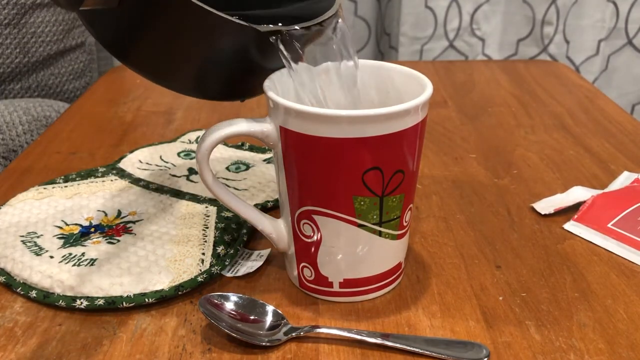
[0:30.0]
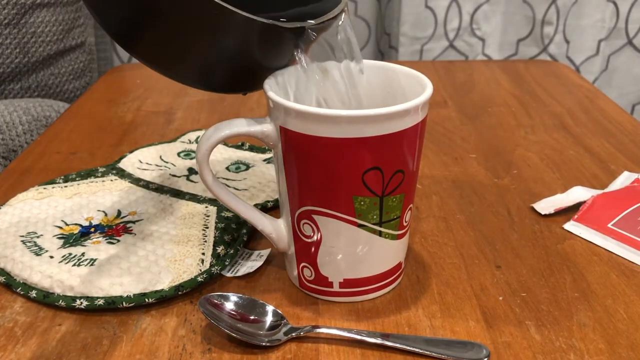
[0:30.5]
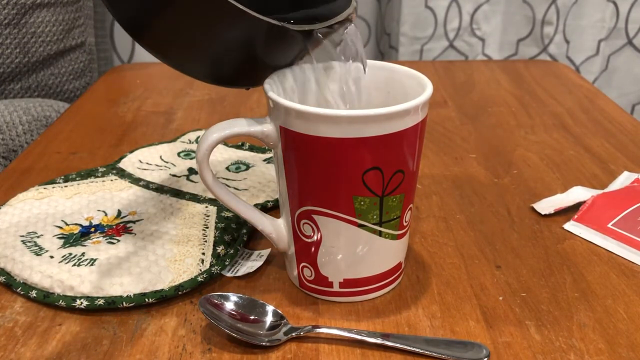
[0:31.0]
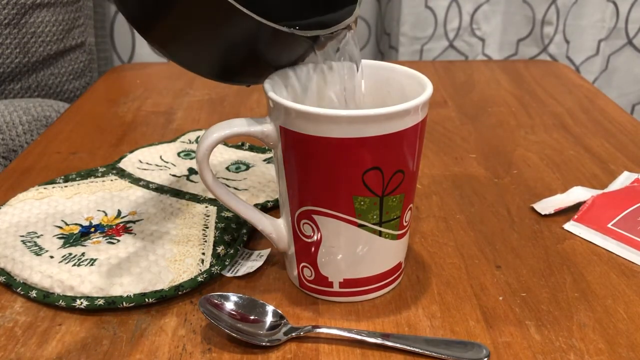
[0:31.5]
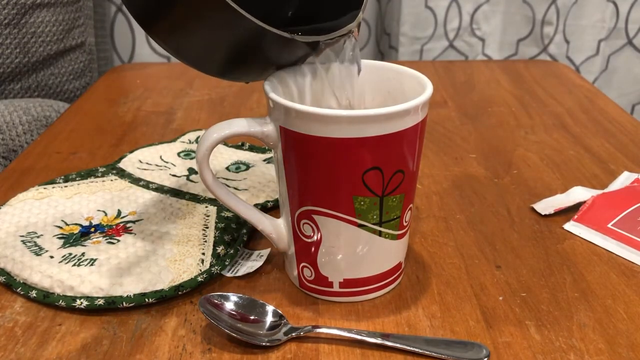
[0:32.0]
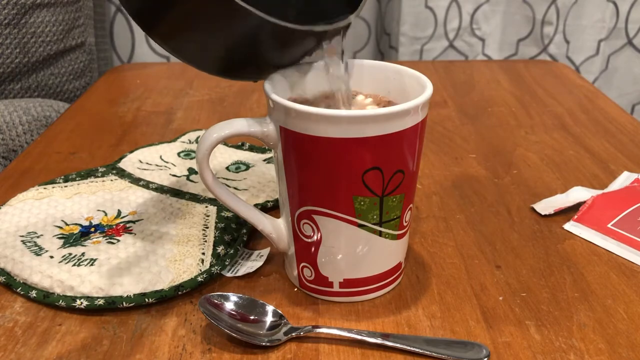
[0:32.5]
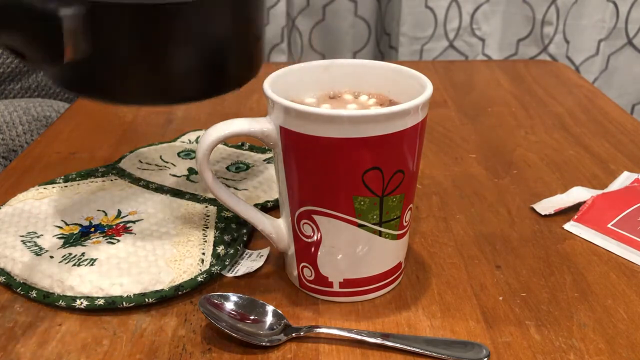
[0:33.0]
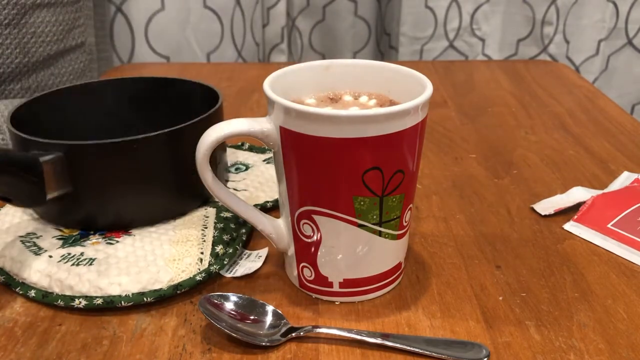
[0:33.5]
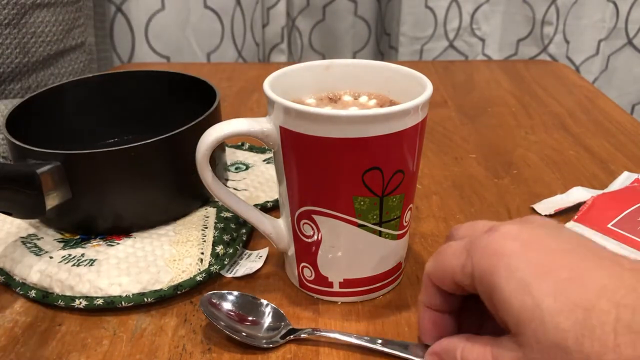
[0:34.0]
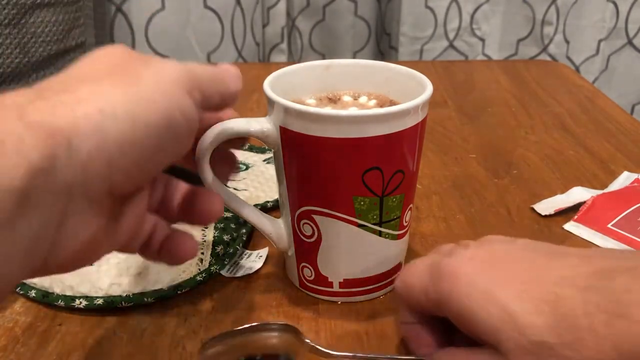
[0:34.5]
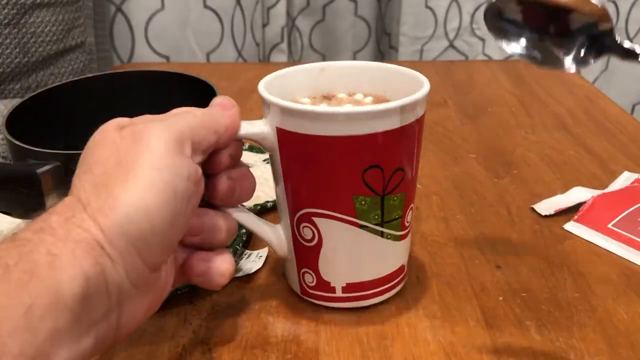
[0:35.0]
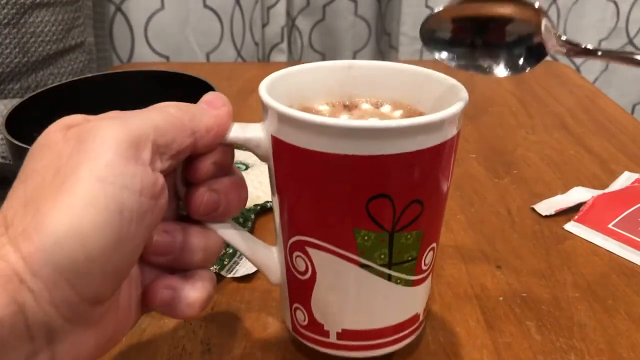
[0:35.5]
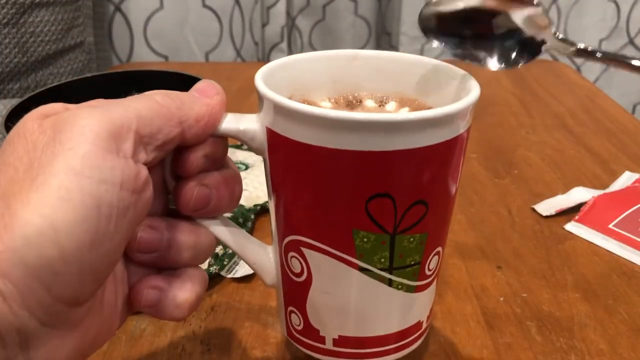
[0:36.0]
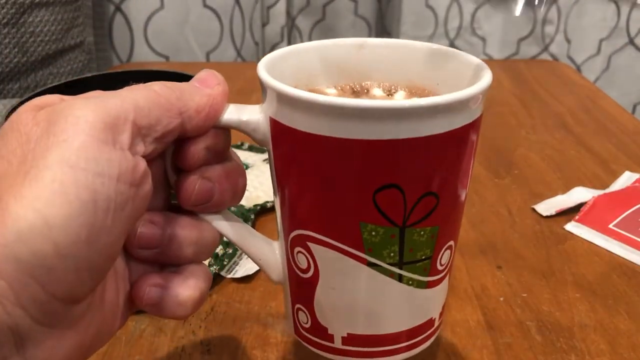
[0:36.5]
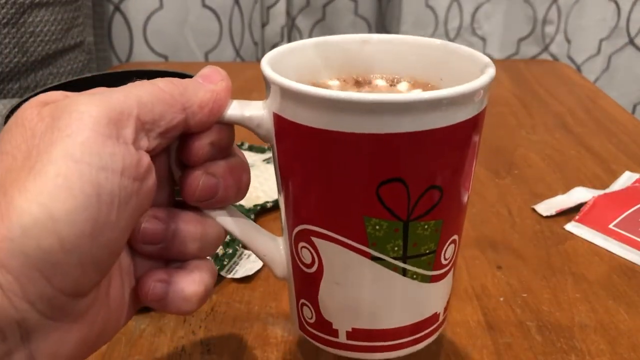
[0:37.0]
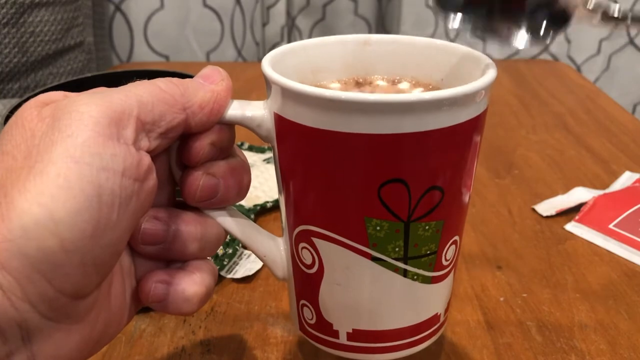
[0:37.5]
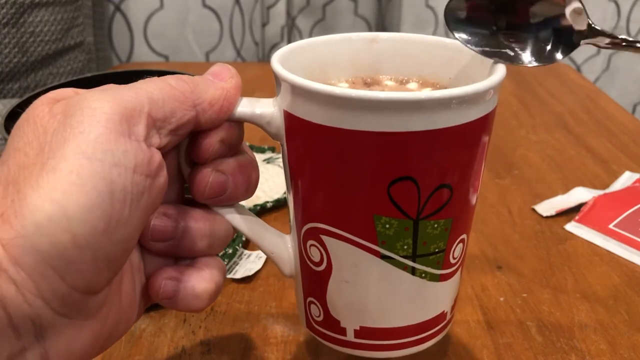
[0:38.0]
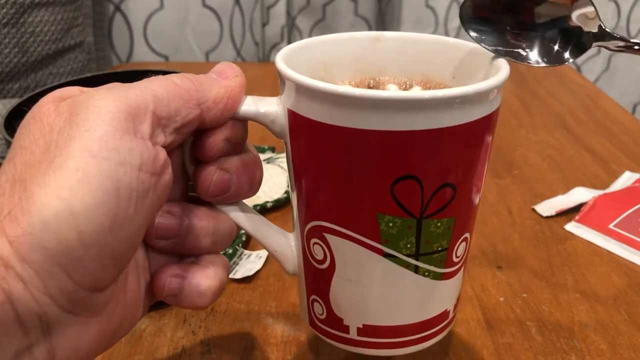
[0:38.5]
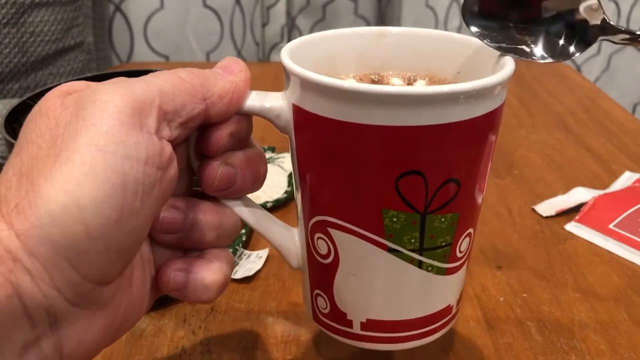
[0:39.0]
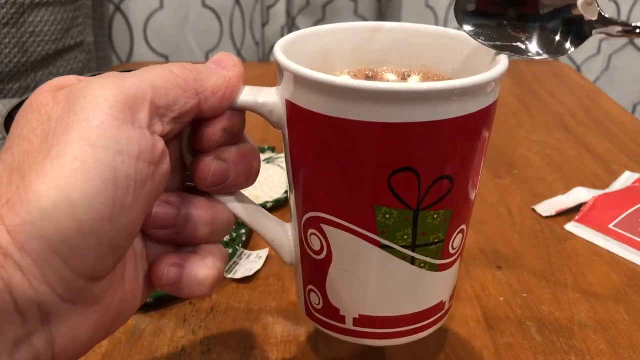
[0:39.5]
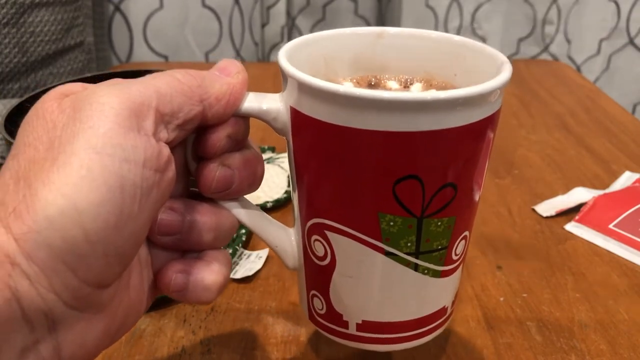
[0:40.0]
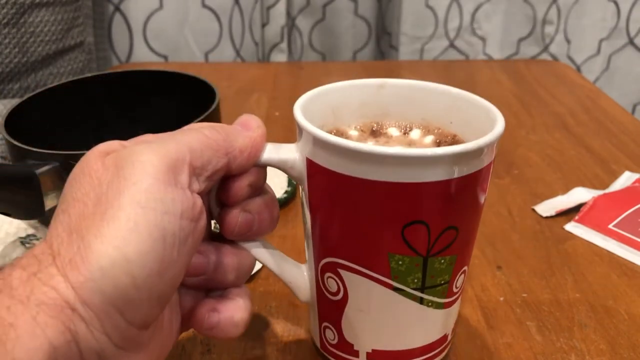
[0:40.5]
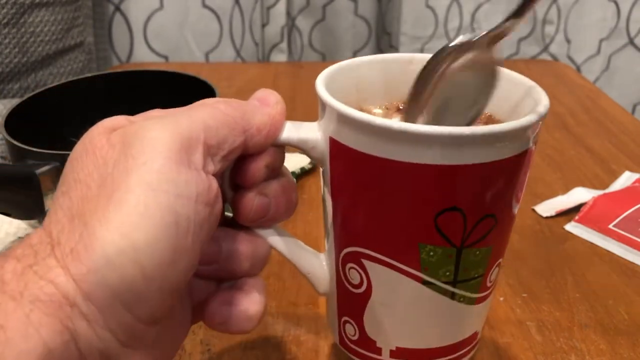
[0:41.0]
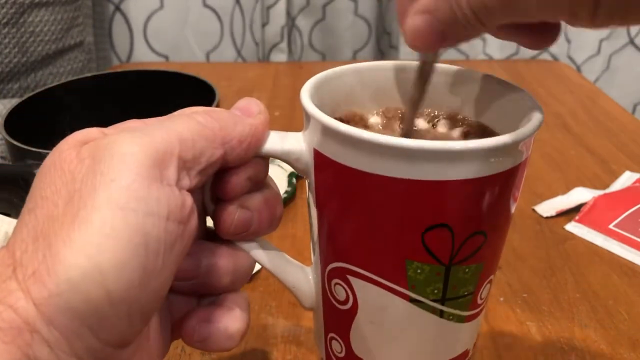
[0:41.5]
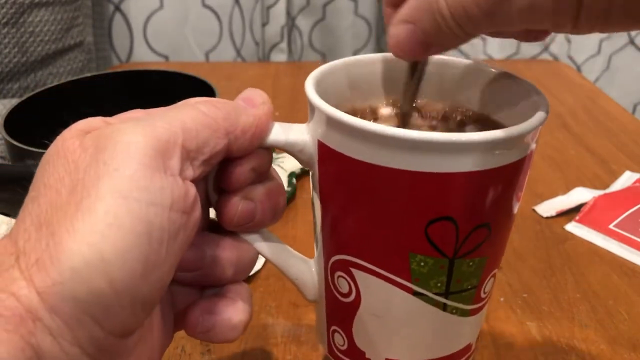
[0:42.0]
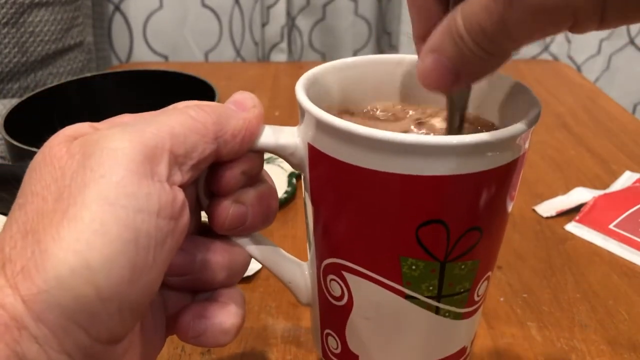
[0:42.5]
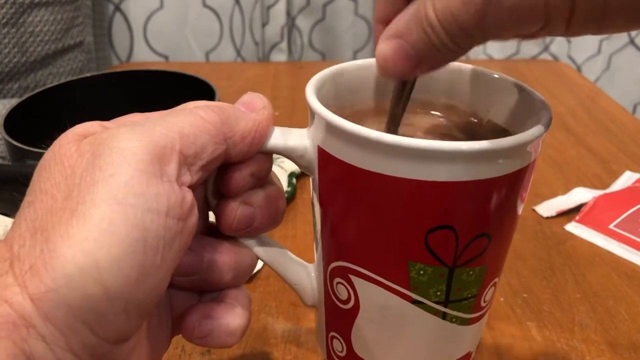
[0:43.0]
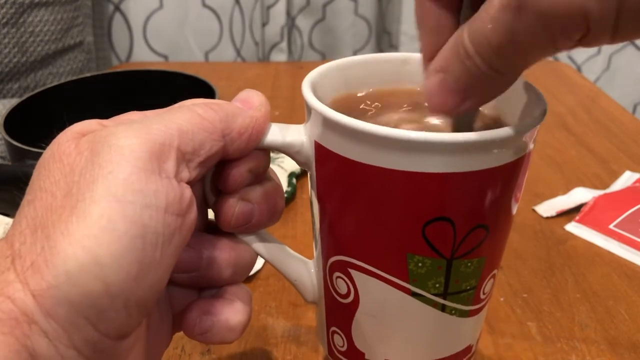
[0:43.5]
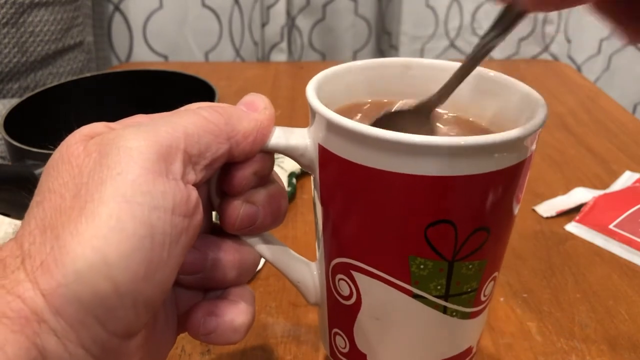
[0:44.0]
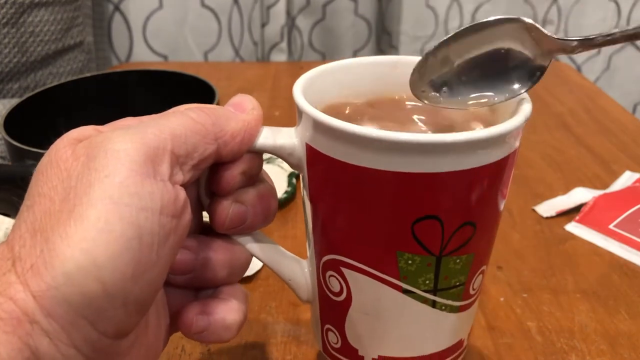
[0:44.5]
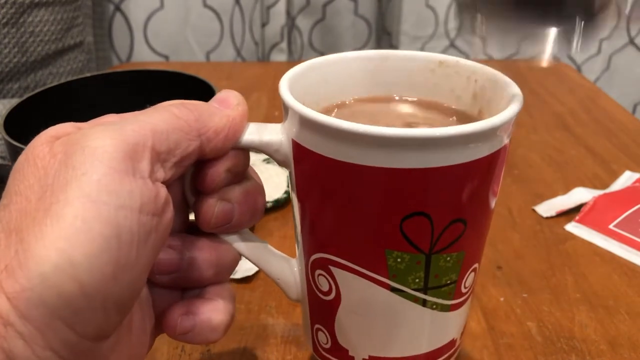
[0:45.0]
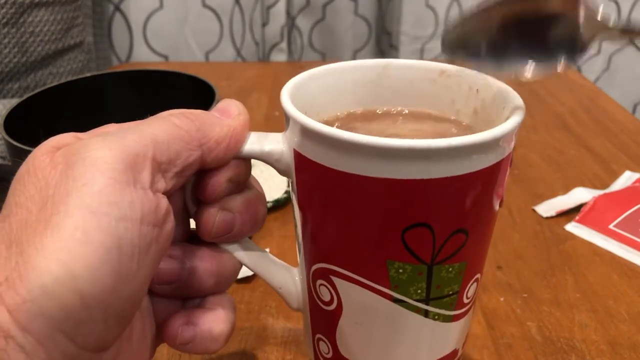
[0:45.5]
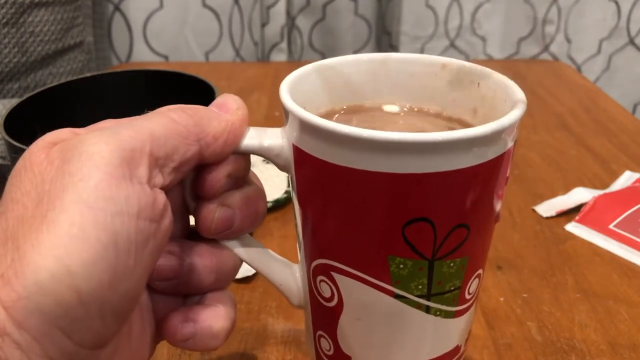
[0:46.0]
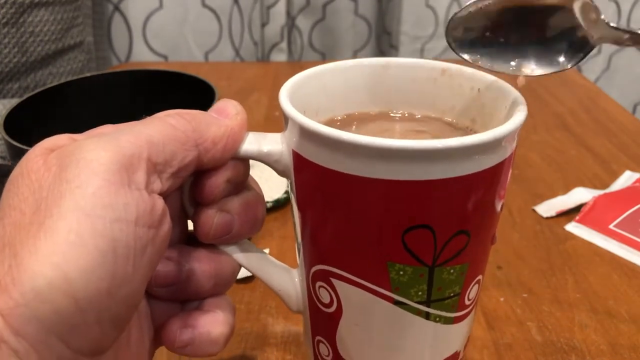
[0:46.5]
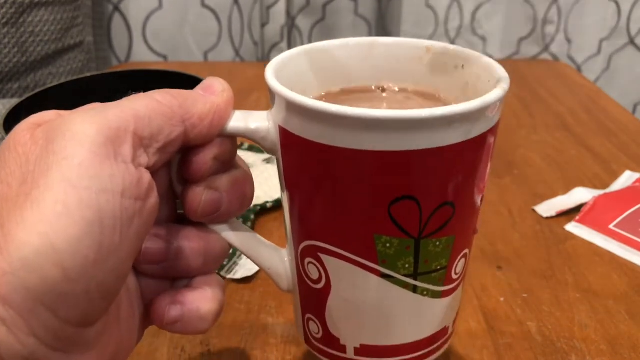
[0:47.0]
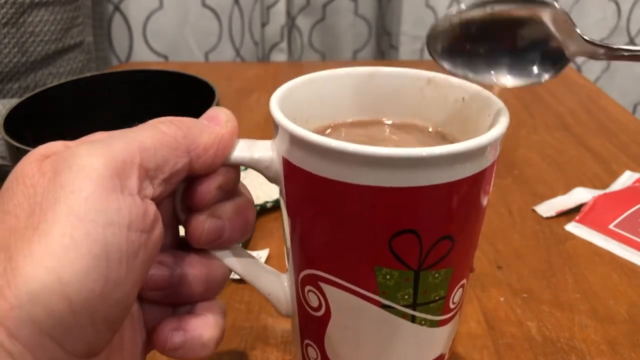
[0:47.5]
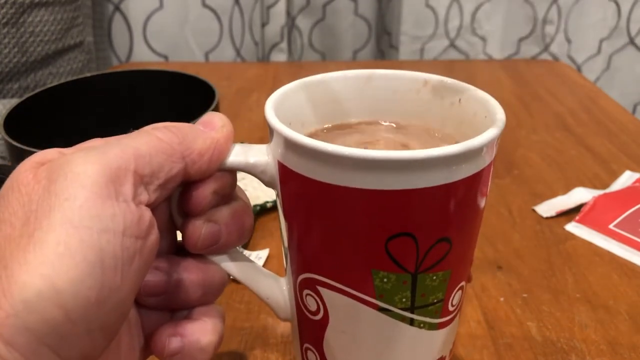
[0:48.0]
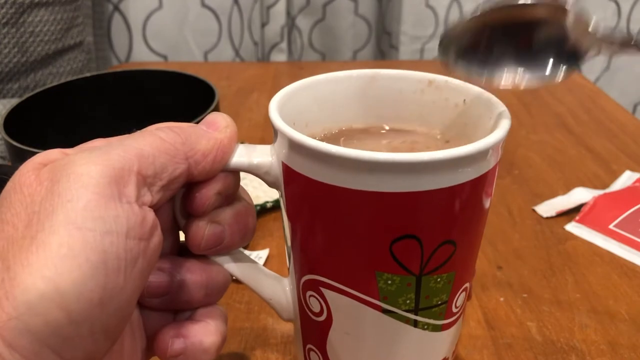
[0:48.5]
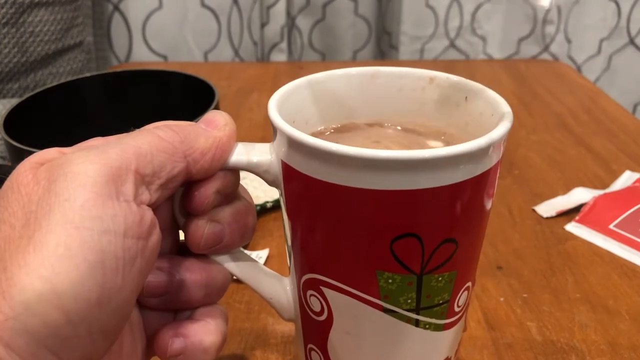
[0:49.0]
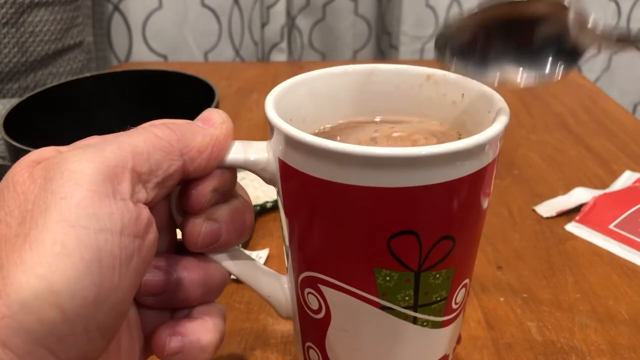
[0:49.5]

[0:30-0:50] The person carefully pours all of the hot water from the pot into the cup. As the water rises, freeze-dried marshmallows from the packet float to the top. The person grasps the mug in their left hand; the fingers are big and thick, so it is probably a masculine hand. With their right hand they tap the mug repeatedly with the edge of the spoon, then stop and swirl the contents into a little whirlpool of chocolate and marshmallows, and then repeatedly hit the cup with the side of the spoon again. Lifting the pot revealed the oven mitt protector it was on: it is shaped like a cat, with embroidered flowers on the cat's chest and some writing in another language that might possibly be German. The edging is green with little black and white flower shapes, and the cat's body is white.